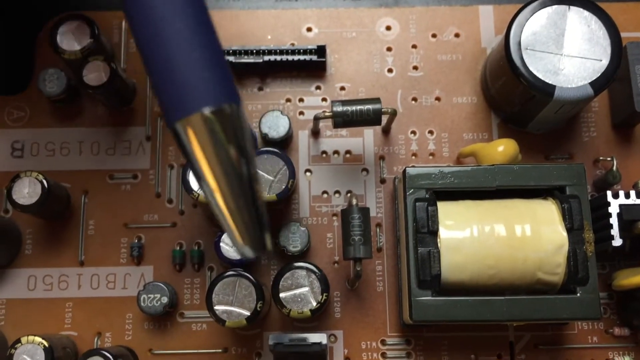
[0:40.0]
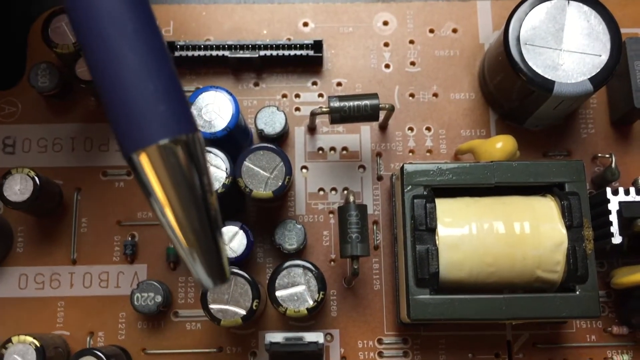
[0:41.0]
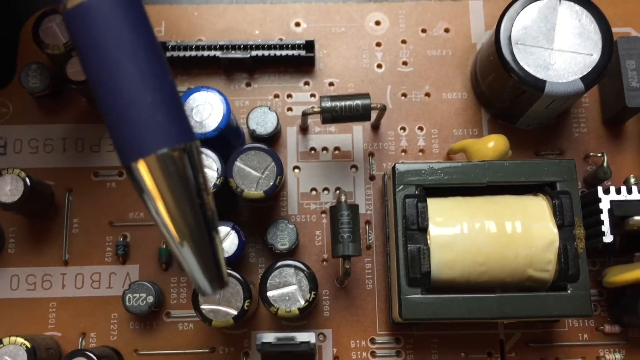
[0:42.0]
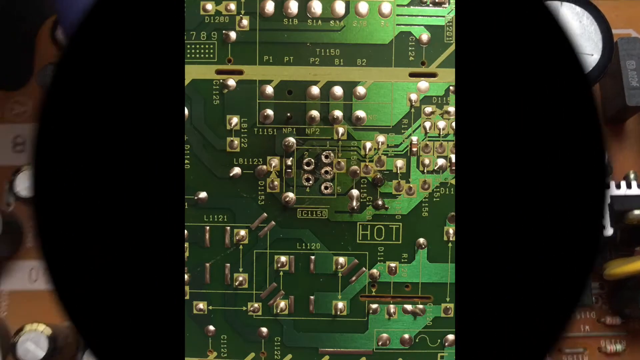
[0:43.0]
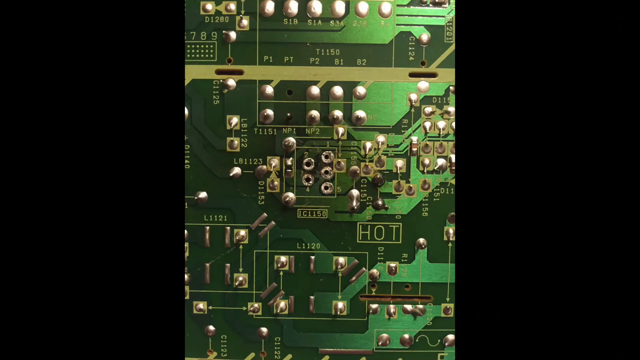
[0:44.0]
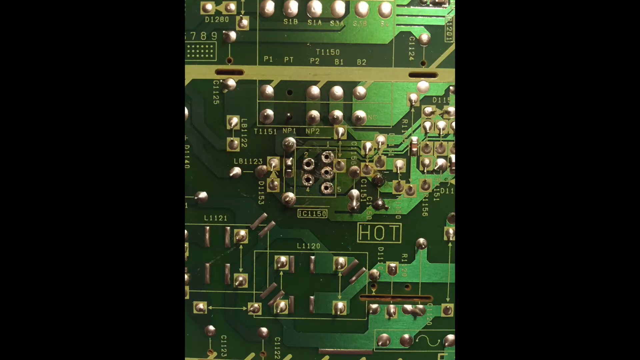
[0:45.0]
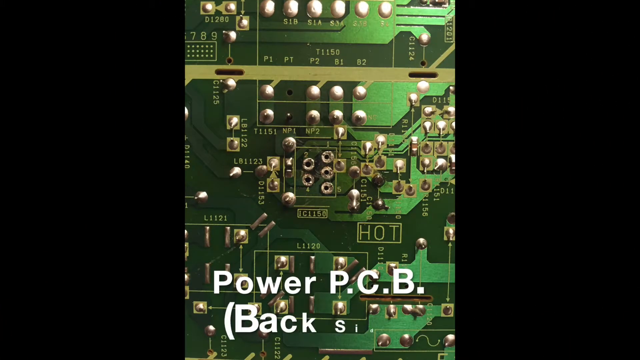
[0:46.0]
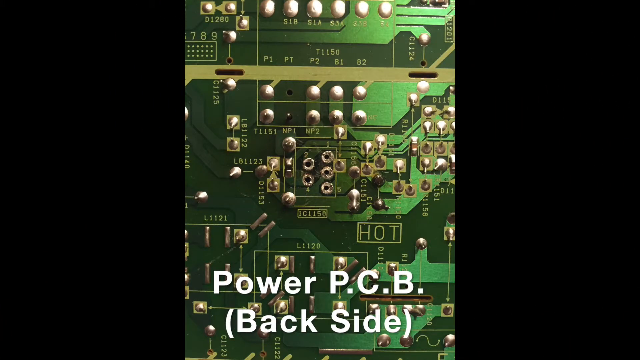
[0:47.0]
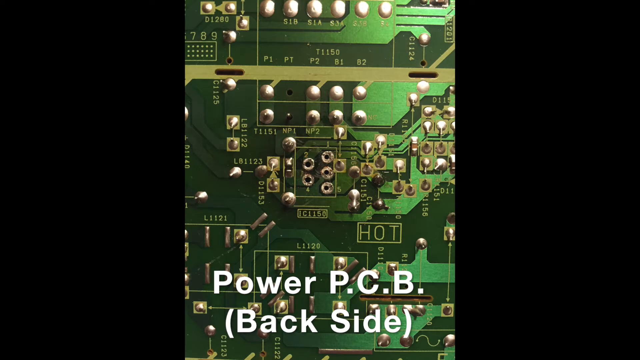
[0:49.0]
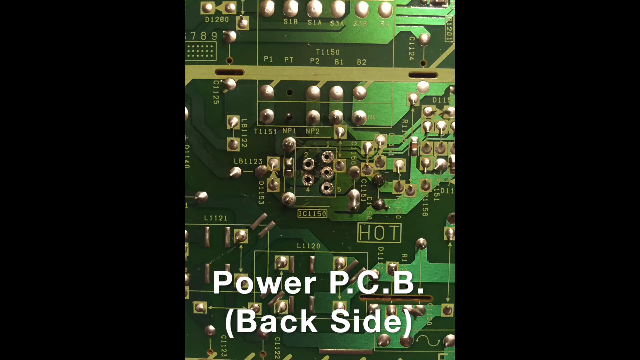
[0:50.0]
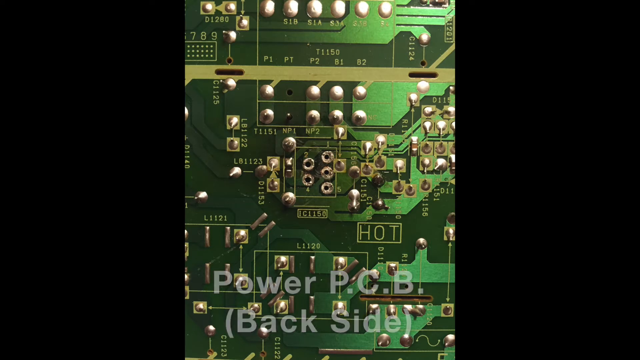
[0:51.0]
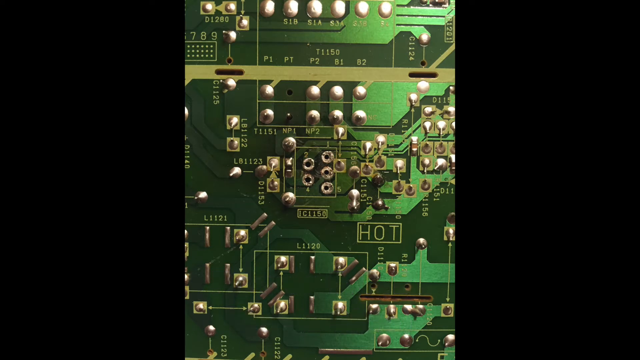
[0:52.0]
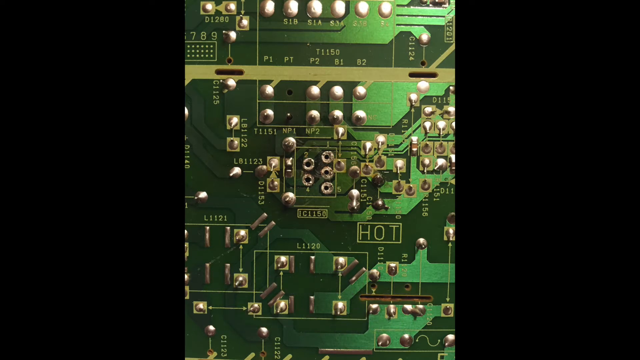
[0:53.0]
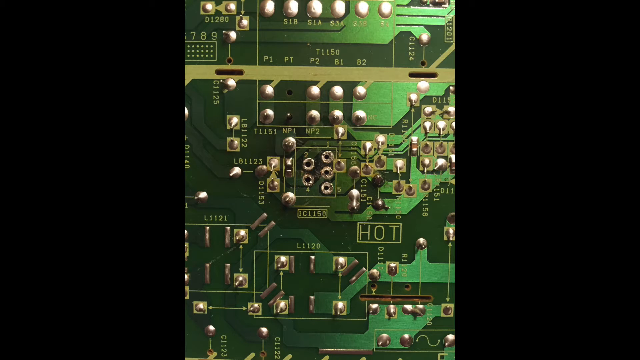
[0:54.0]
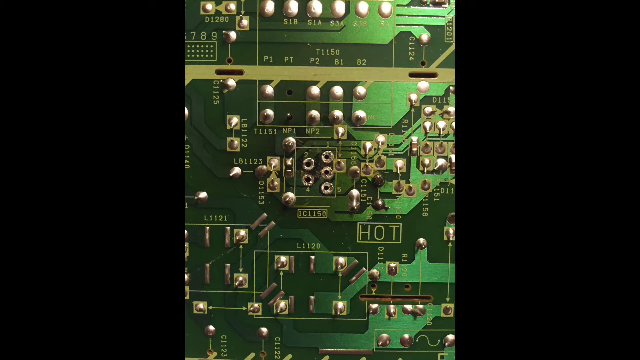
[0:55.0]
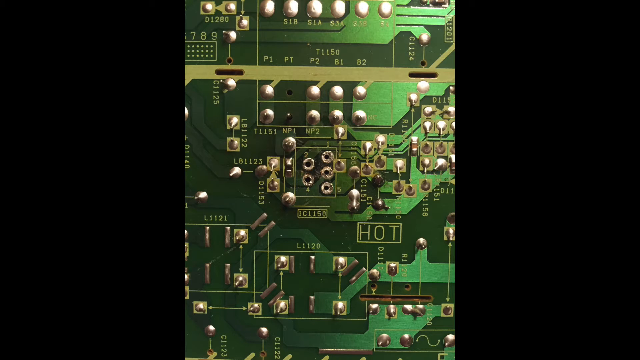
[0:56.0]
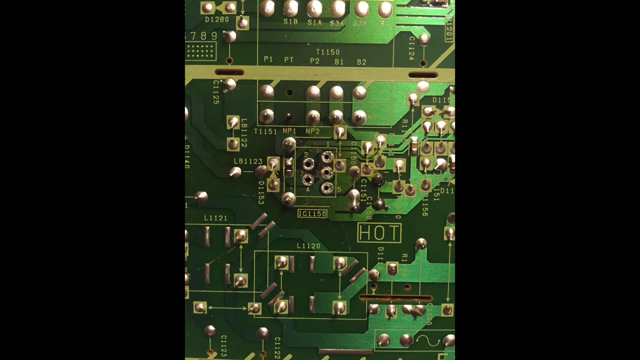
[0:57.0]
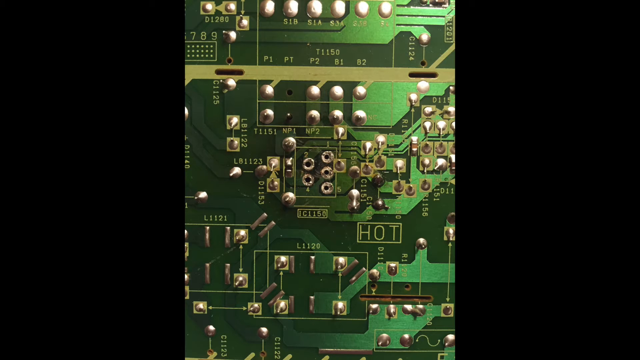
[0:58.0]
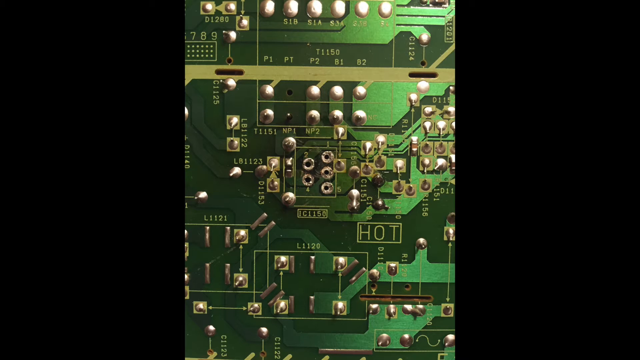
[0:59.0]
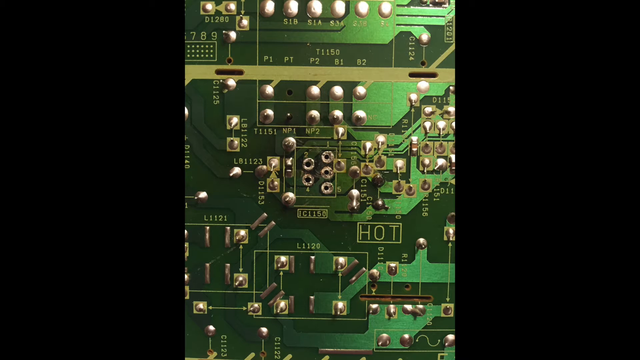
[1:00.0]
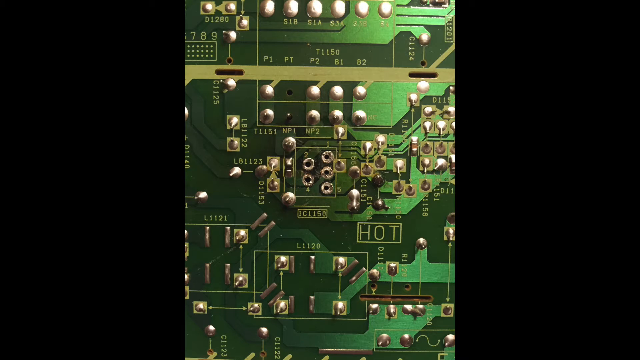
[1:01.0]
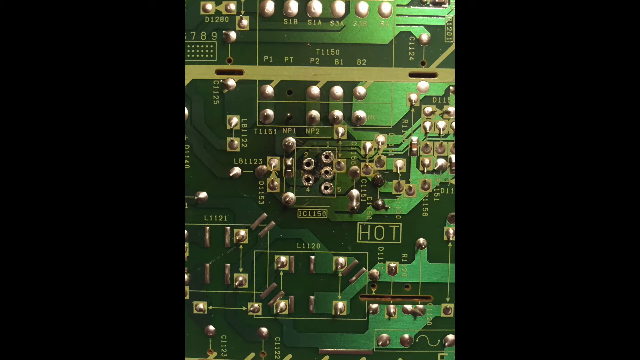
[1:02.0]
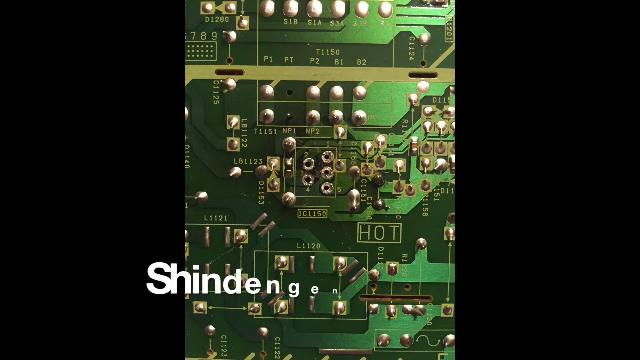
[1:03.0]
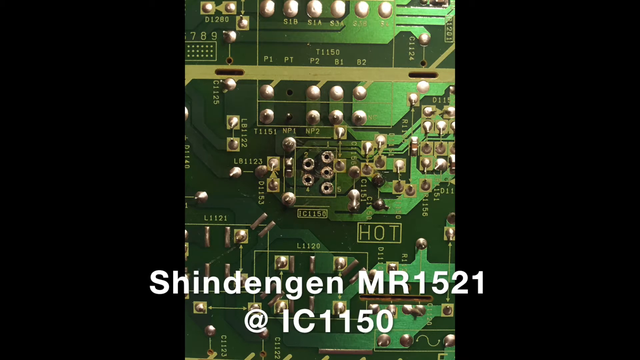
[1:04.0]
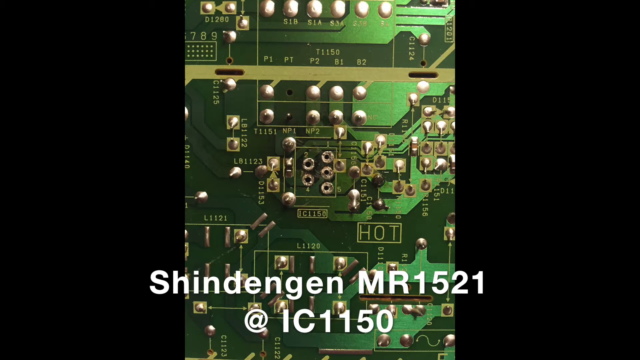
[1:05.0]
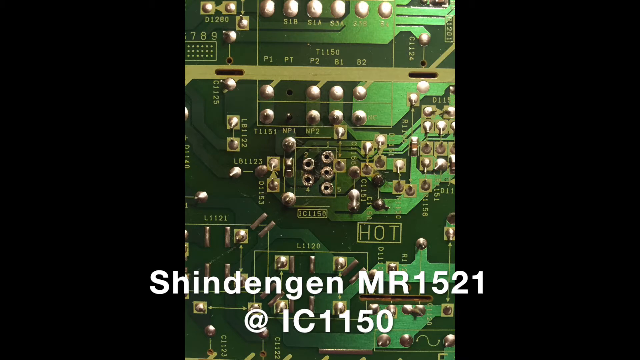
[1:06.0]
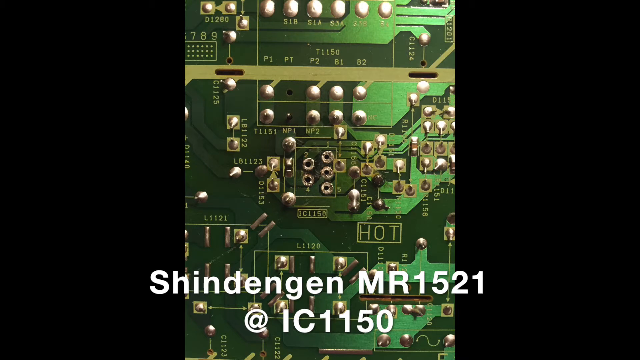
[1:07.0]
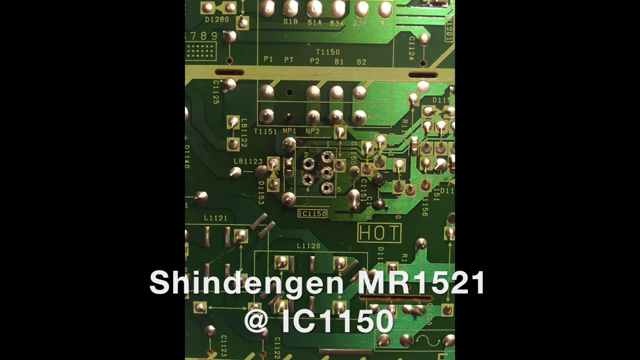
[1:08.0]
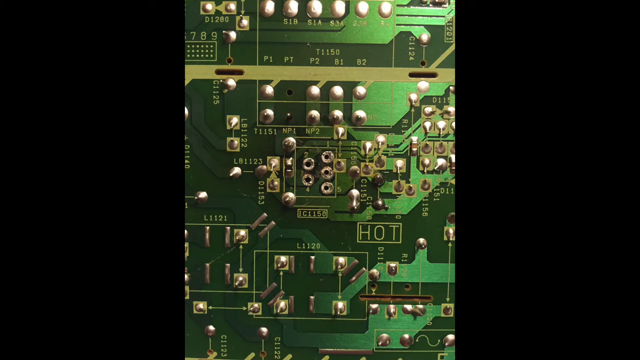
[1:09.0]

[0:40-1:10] The person blows on the top of the other cylinder next to the tall black bottom cylinder. A circle transition then expands from the middle and replaces everything. A different circuit board appears: a green one with many little white dots and connections, a number of open circles with black holes in them, and numbers scribbled throughout. On the bottom right is a single word, "HOT". Most other labels are just letters and numbers; for example, just to the left of "HOT", on the upper side, is "IC1150", and below that "L1120". Text pops in reading "PowerPCB", with "Backside" in brackets below it. The shot holds on this, and then a model code appears that reads "Shindengen MR1521 @ IC1150".